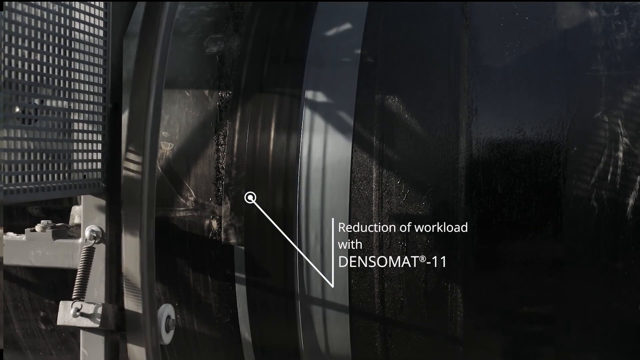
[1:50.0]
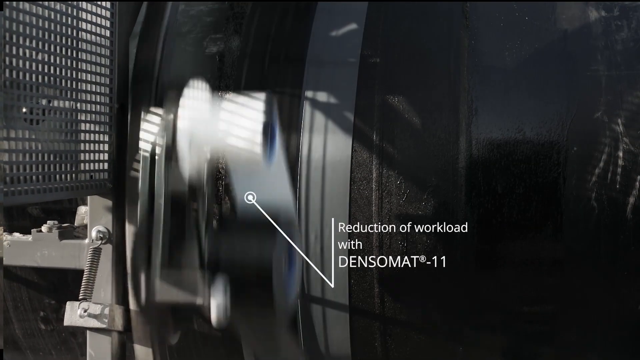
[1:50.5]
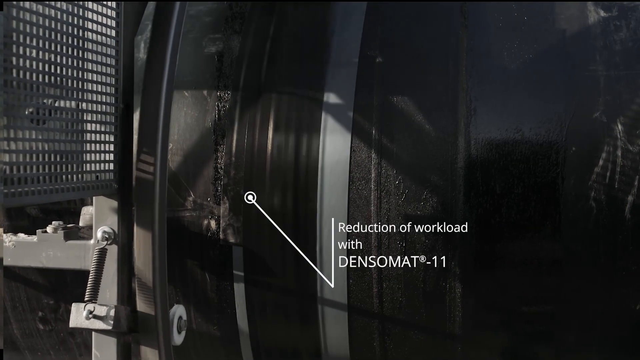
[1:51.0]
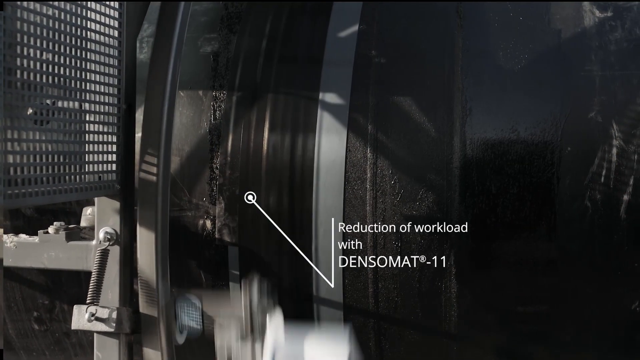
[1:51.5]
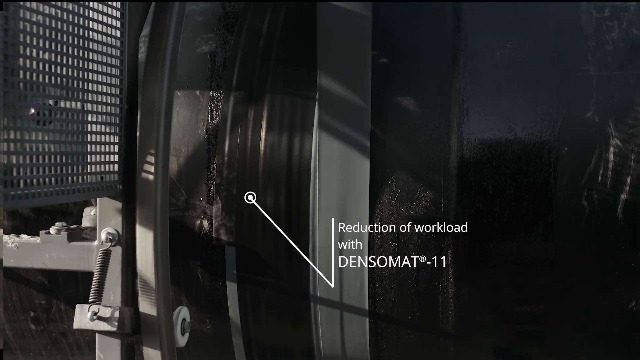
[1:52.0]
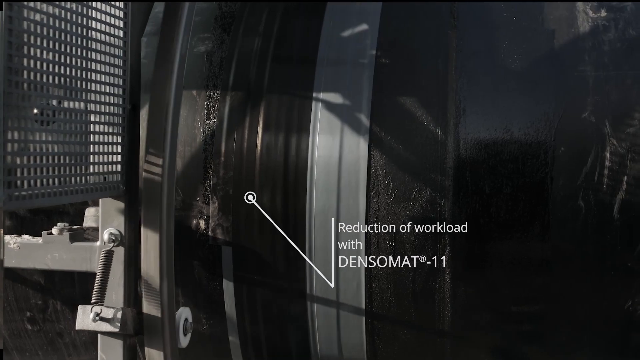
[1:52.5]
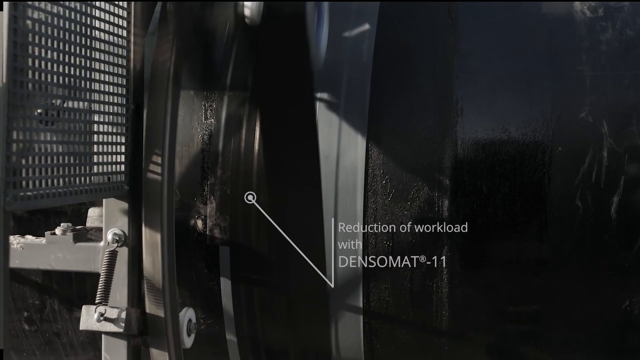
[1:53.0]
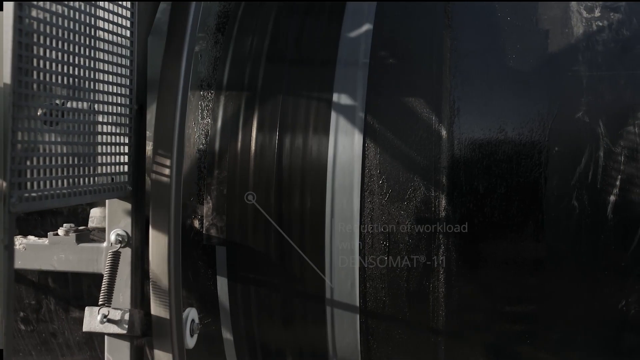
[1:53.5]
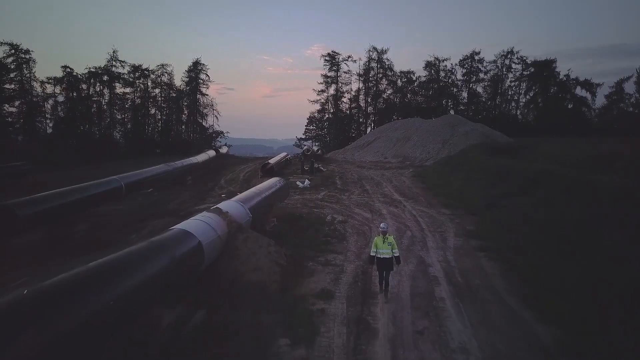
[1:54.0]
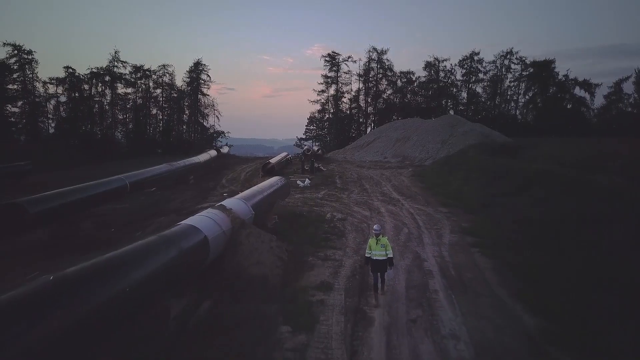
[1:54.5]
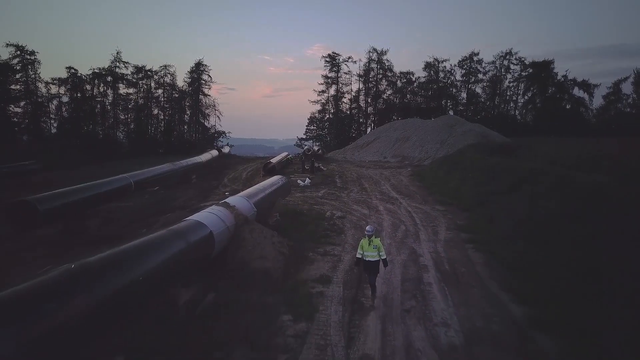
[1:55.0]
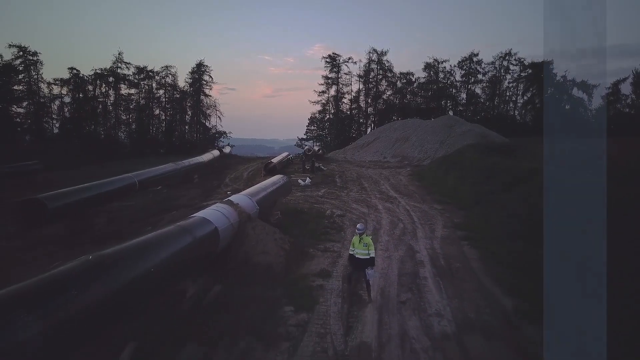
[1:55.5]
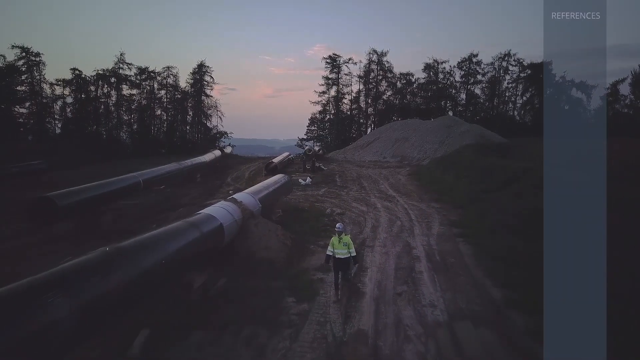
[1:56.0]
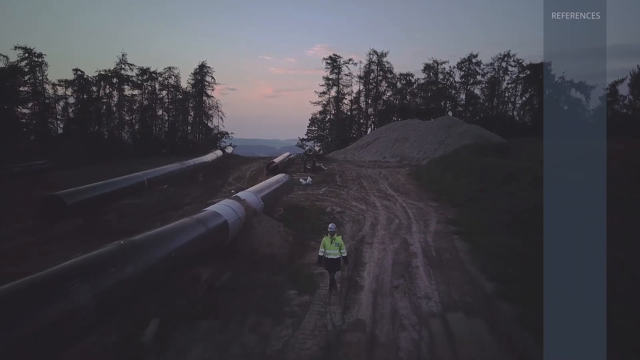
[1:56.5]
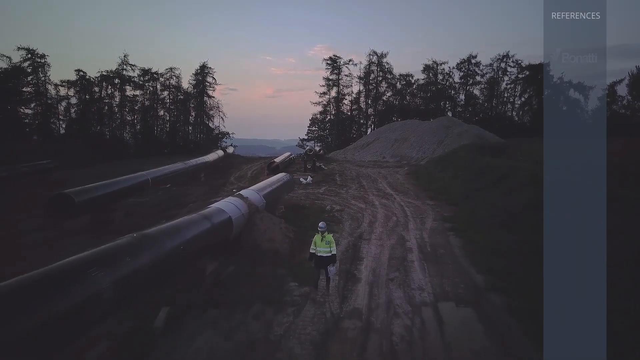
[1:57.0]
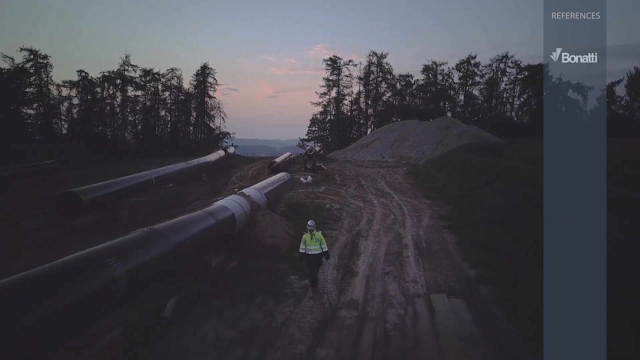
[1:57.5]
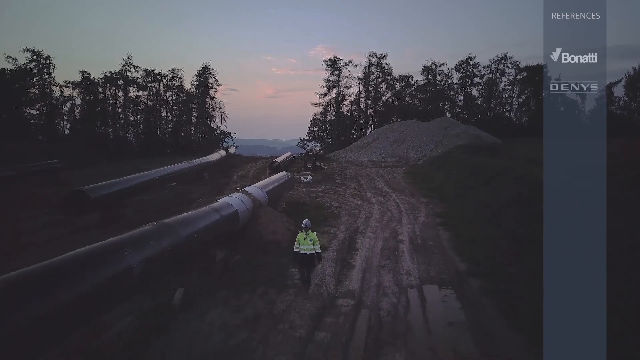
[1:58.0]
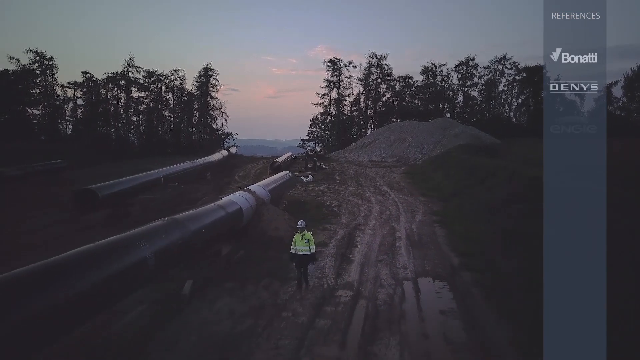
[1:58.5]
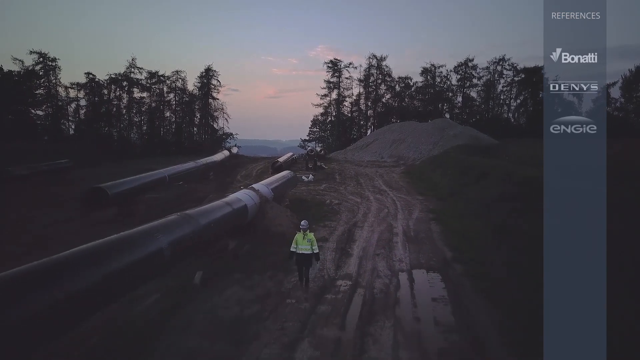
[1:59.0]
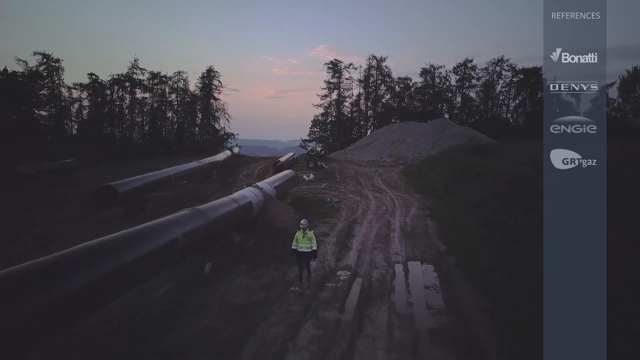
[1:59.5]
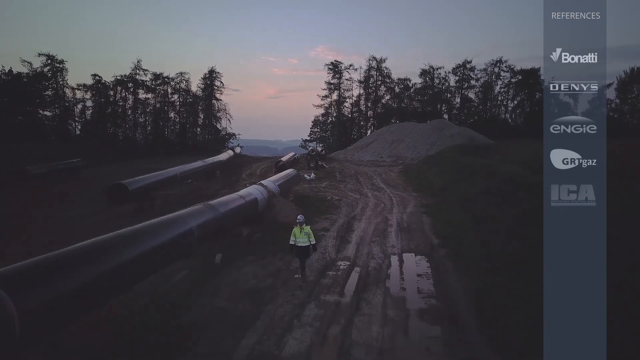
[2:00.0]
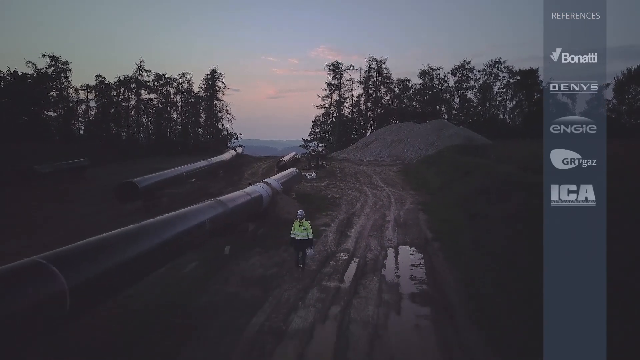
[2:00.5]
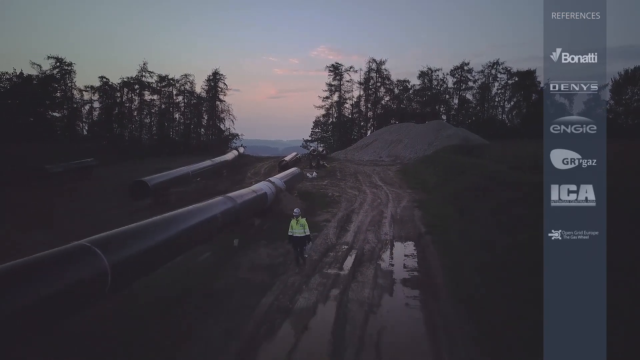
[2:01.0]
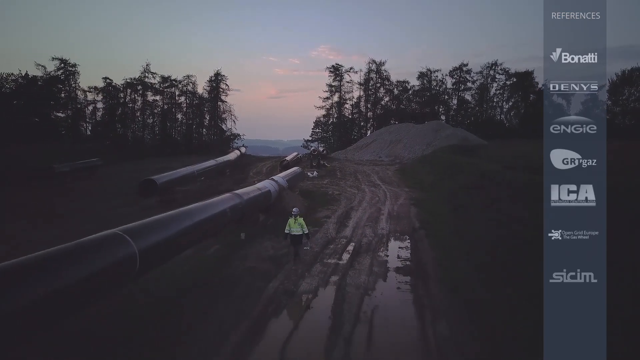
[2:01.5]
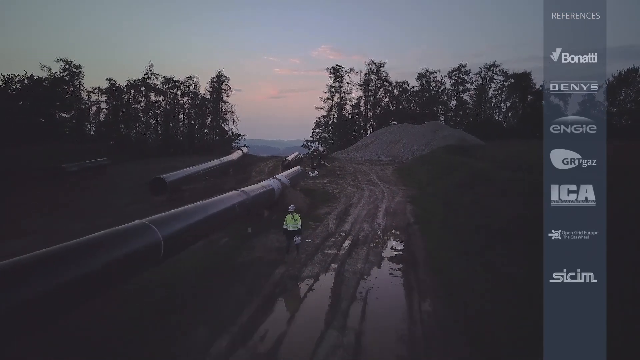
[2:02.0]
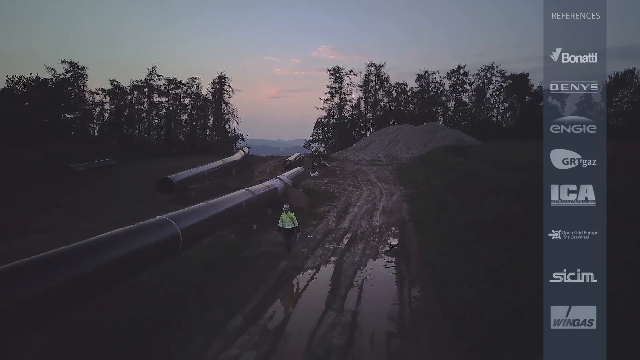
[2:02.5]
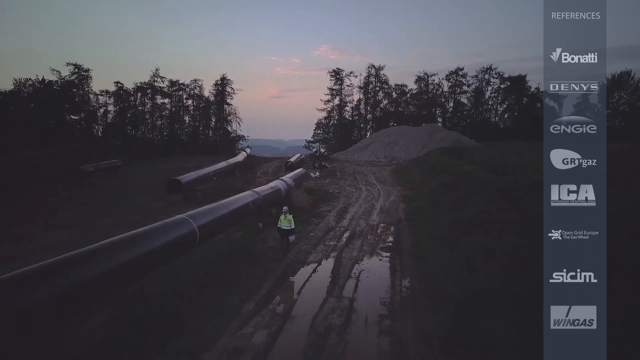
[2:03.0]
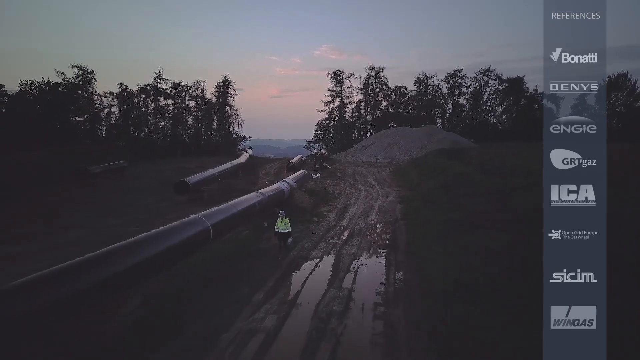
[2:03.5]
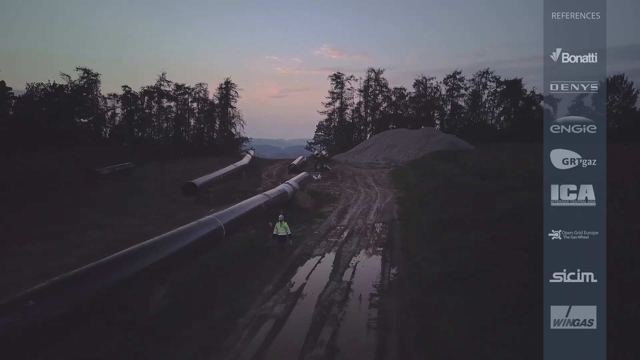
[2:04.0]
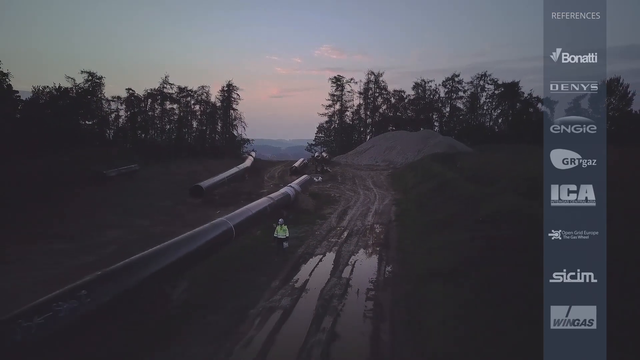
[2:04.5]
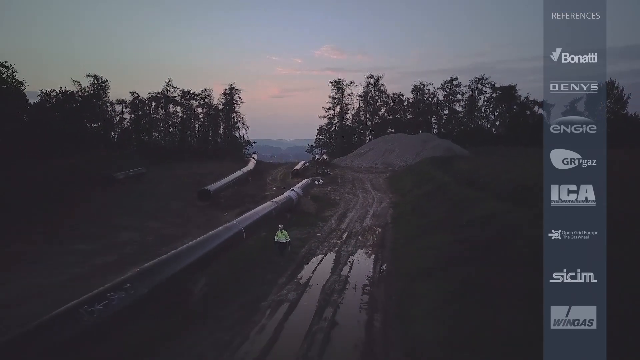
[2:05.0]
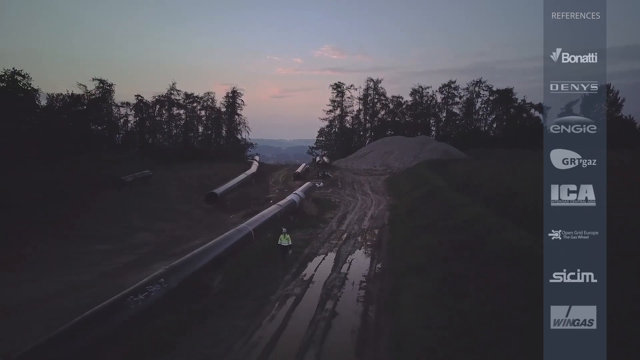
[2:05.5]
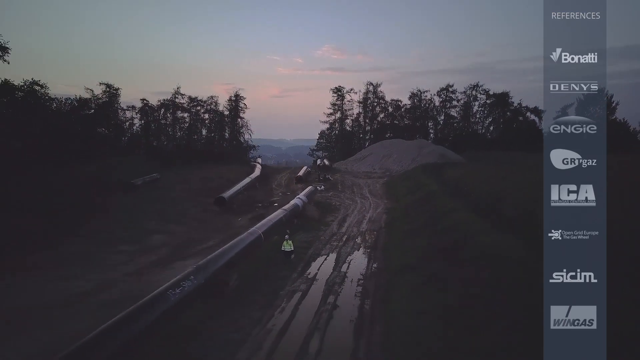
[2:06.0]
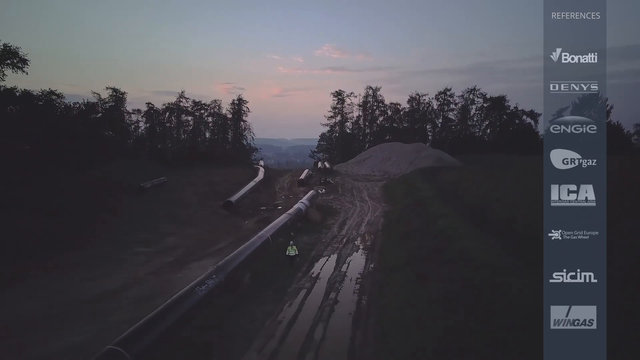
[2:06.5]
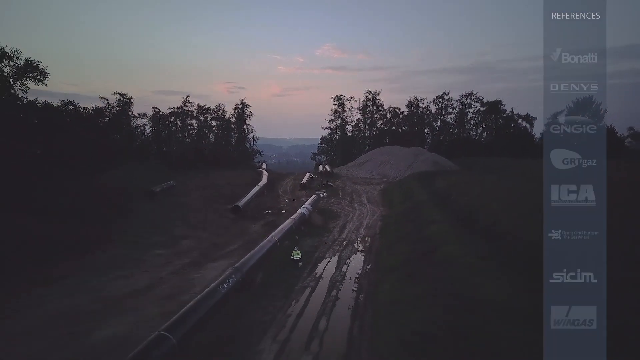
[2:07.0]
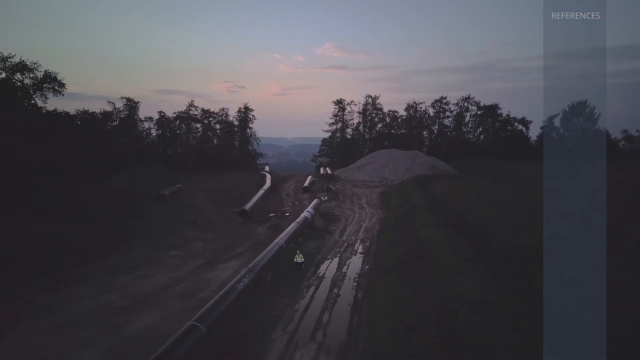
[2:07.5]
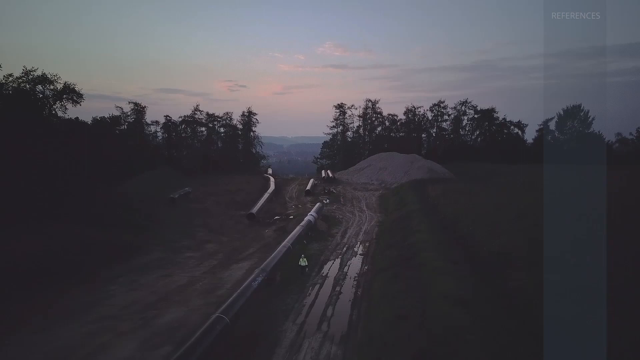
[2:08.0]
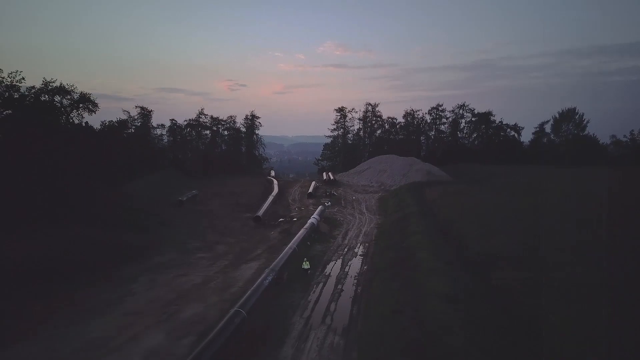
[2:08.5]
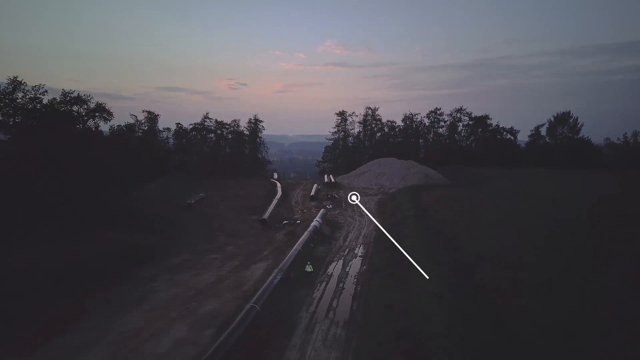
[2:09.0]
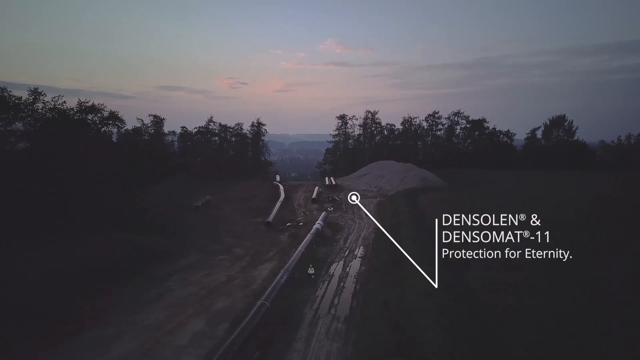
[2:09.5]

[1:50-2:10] Gears on a pipeline go around and around. A construction site follows, with a dug-out path that is still dirt. A man walks along the path, and on his right are two big pipelines that have been put in place. Along the right side, a gray vertical border lists company names from top to bottom. The muddy path looks like it has puddles, as a reflection is visible while the man walks. The camera moves farther and farther away, and parts are labeled with a white dot and drawn lines. The view then quickly flashes to a close-up of the turning gears.